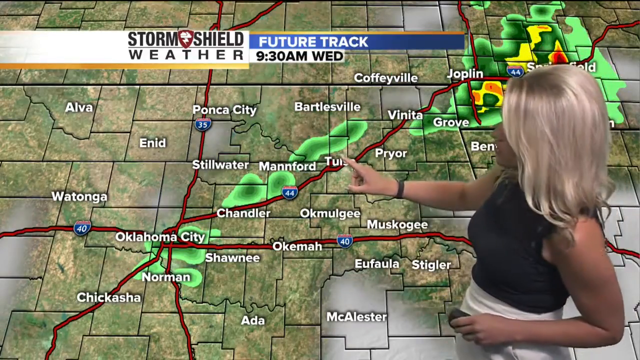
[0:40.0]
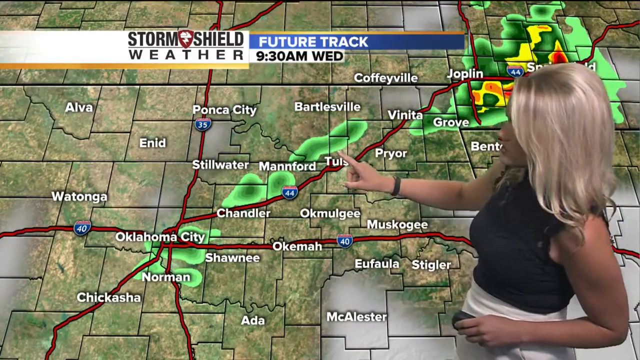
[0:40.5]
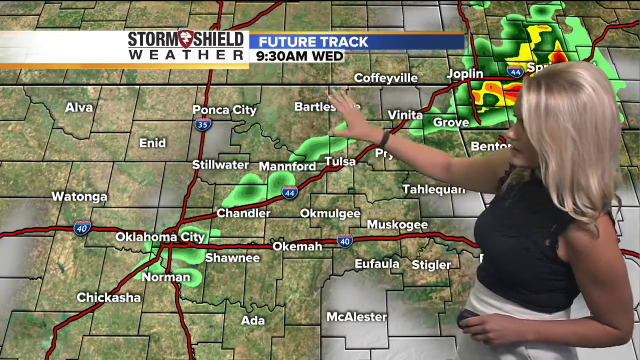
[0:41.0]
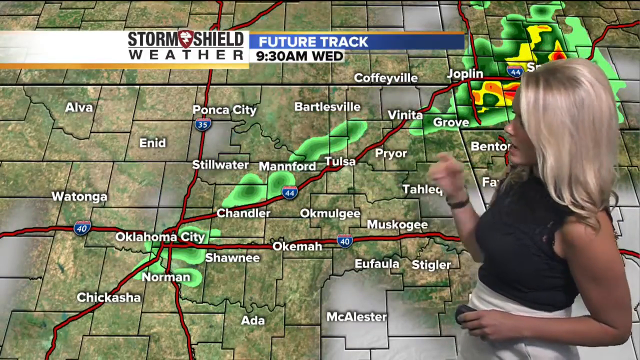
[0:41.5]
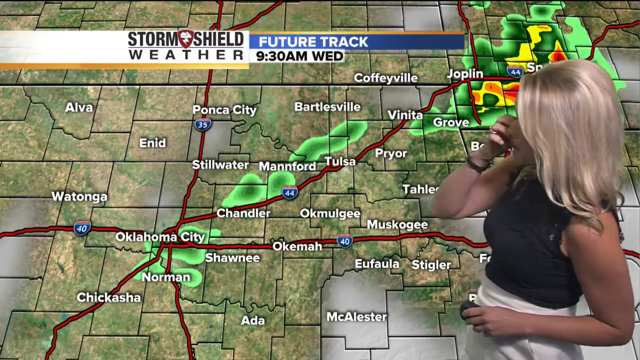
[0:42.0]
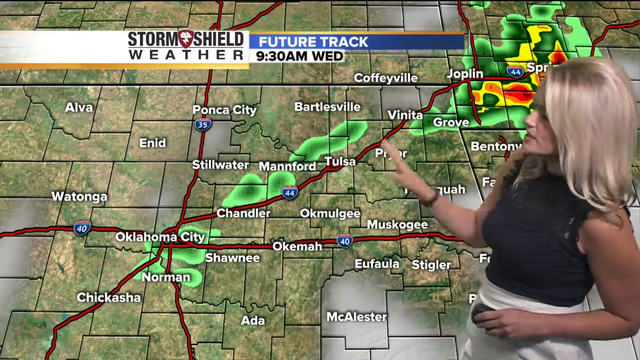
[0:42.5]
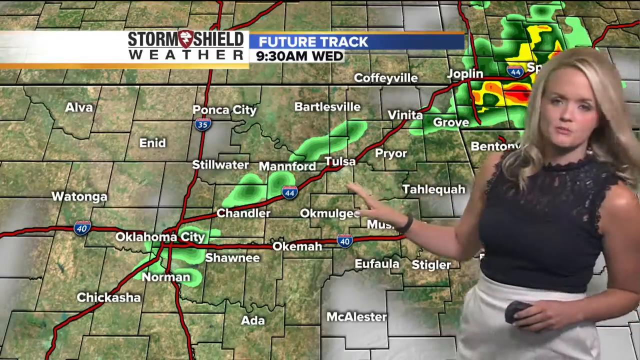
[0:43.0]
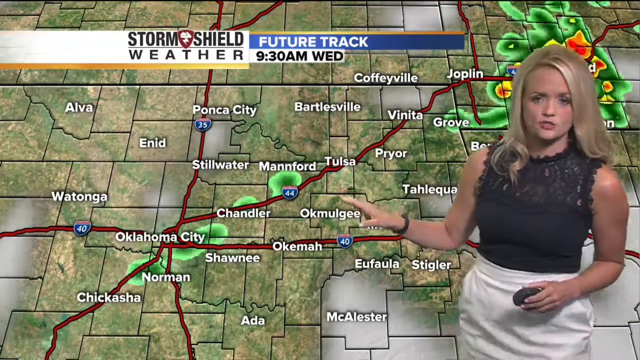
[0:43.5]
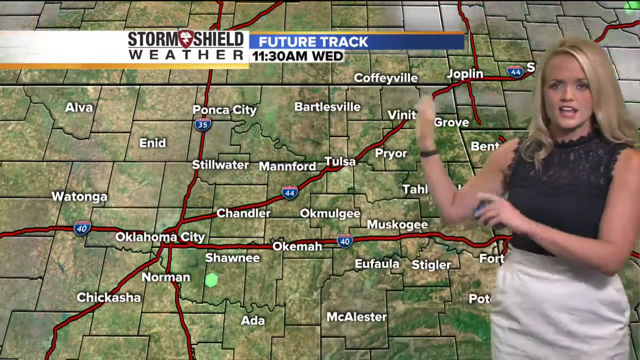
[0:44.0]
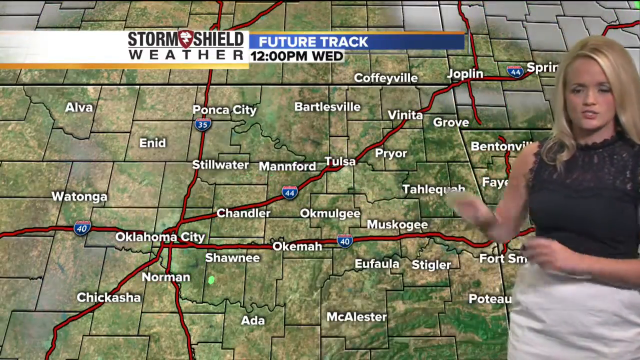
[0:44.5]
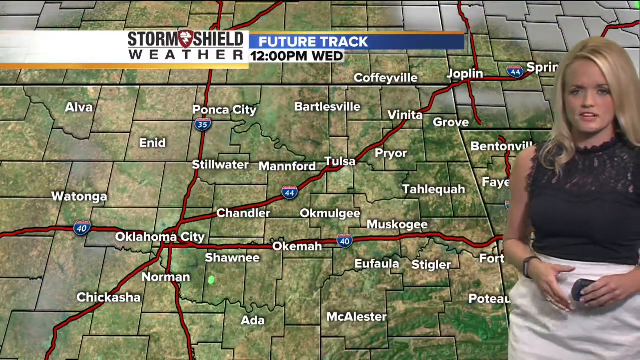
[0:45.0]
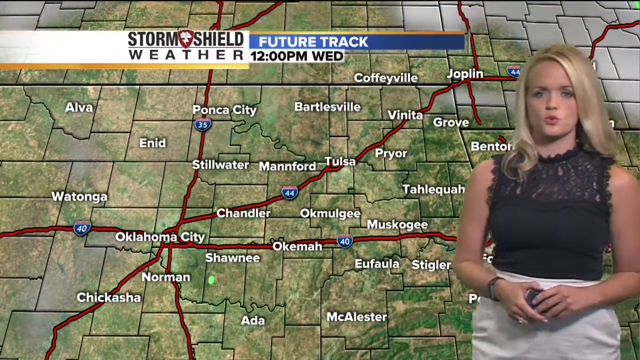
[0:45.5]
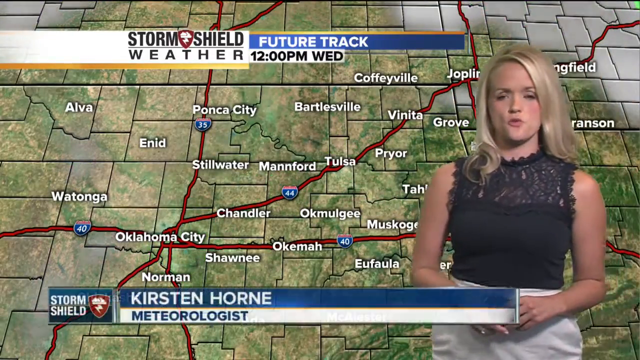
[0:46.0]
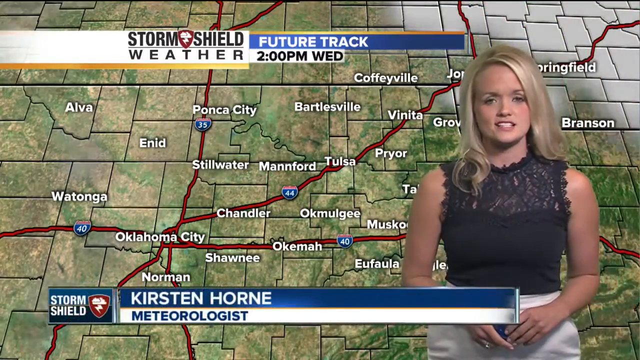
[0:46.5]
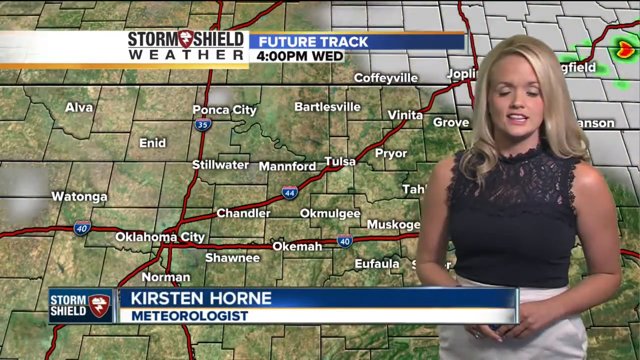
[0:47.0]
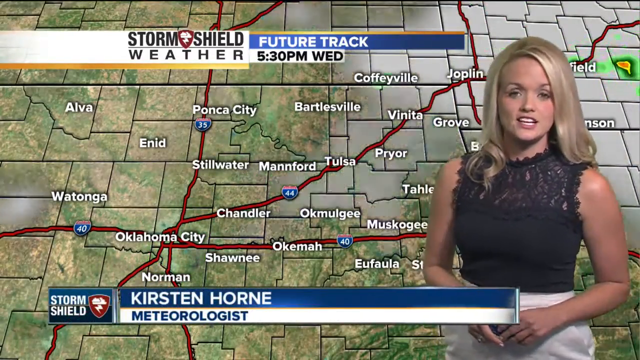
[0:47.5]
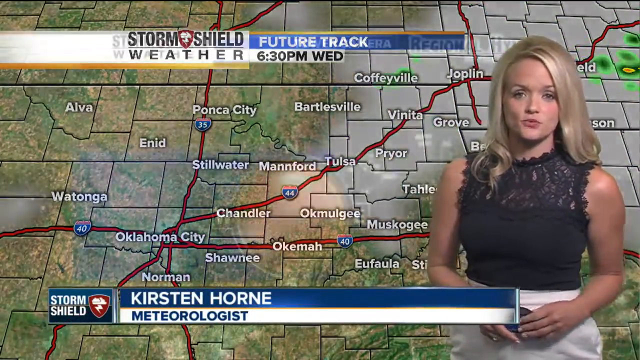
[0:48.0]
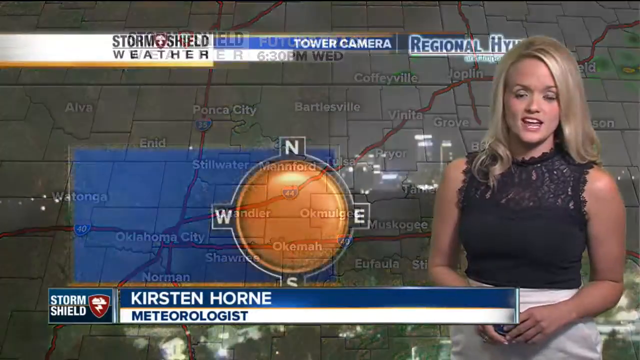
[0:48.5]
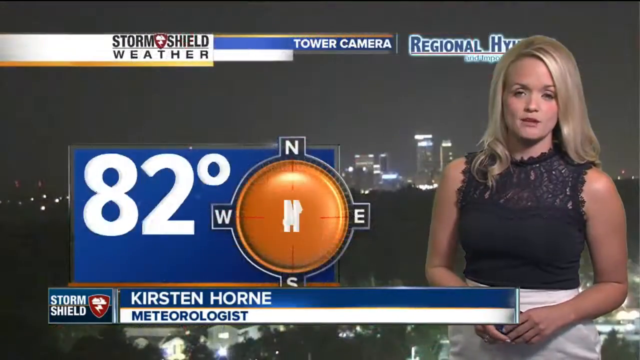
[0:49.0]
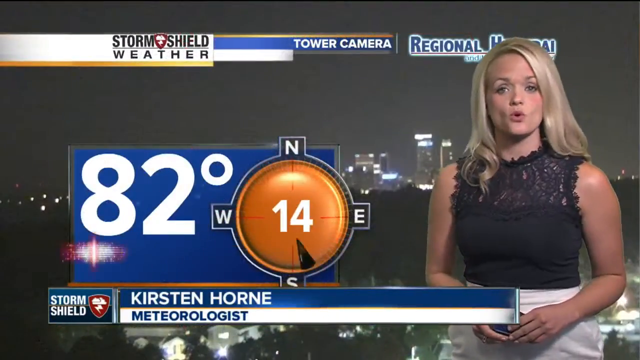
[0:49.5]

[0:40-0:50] The weather map is green with shading in darker greens and some tans, with brown or black lines and some white lines cutting it into sections to show the various counties. The cities are labeled in white block letters, and the roads connecting them are highlighted in red, each with a blue shield. Highway 40 runs to the south near Oklahoma City, Highway 35 leads south from Oklahoma City and also runs through Oklahoma City to Ponca City, where the storm is strongest, and north of Joplin is Highway 49. The storm area is a churning, writhing mass of green, with red, yellow and orange blotches and a few purple ones in its center marking the more severe parts. It takes up most of the northwest part of the map. The map pans back to show the woman gesturing to the map, with some blue sections underneath the storm, possibly where the storm is heading next. She points with her finger toward Bartlesville and then down to a blue square at the bottom of the screen, which shows a severe thunderstorm watch.